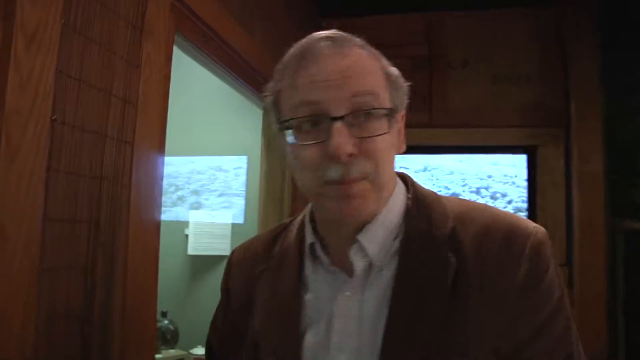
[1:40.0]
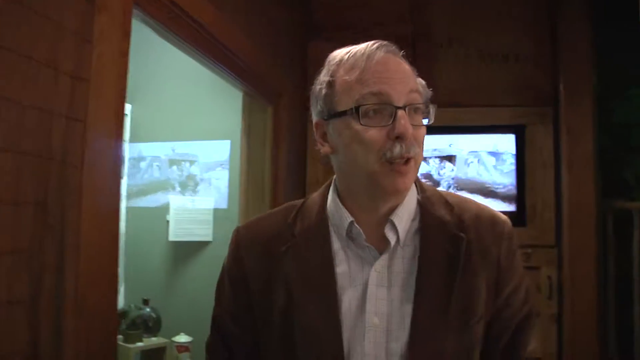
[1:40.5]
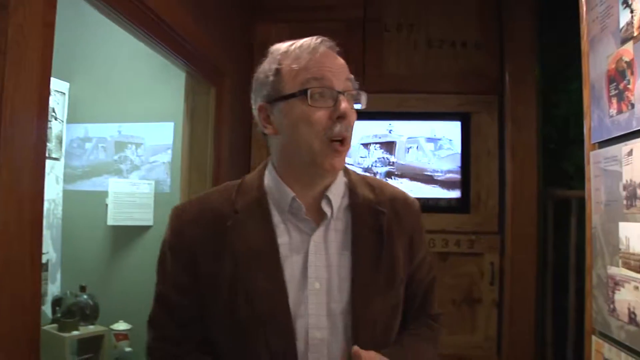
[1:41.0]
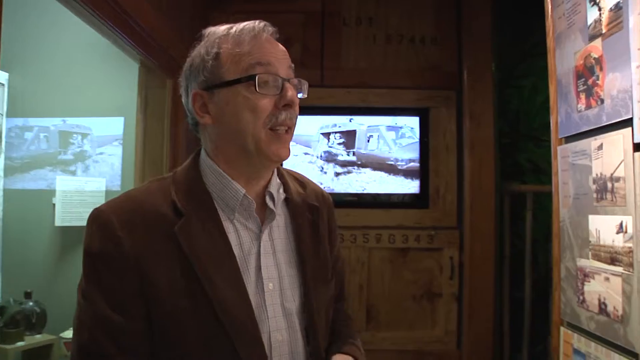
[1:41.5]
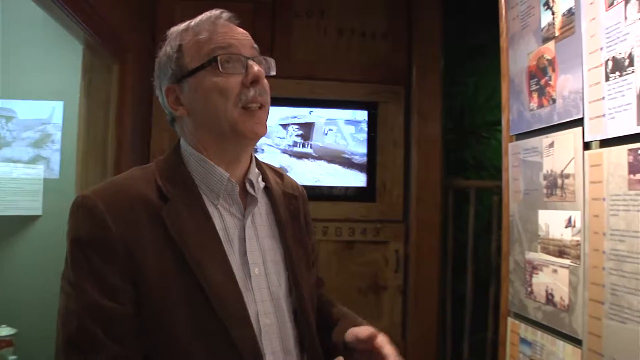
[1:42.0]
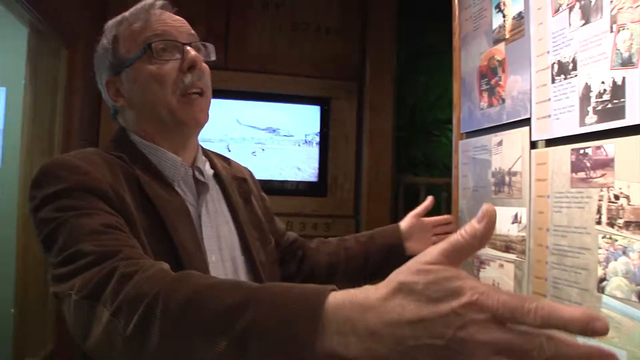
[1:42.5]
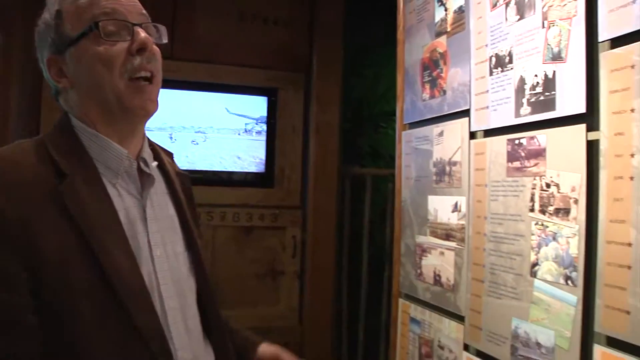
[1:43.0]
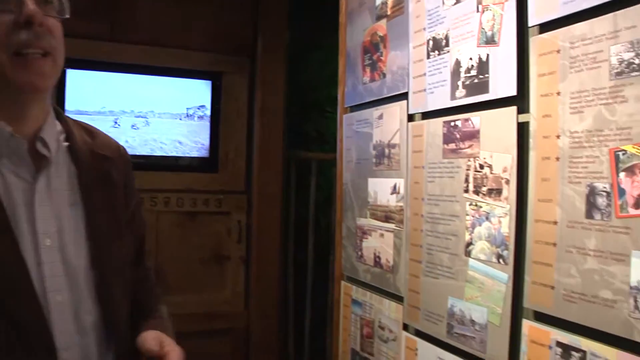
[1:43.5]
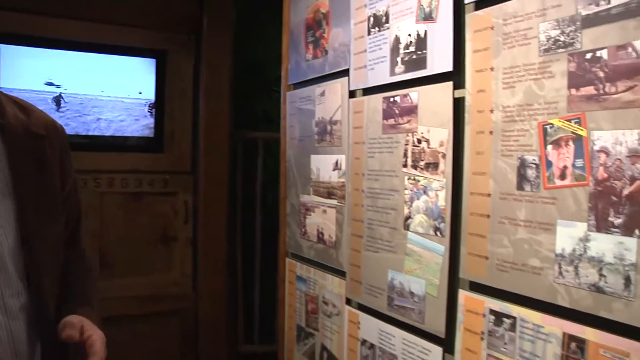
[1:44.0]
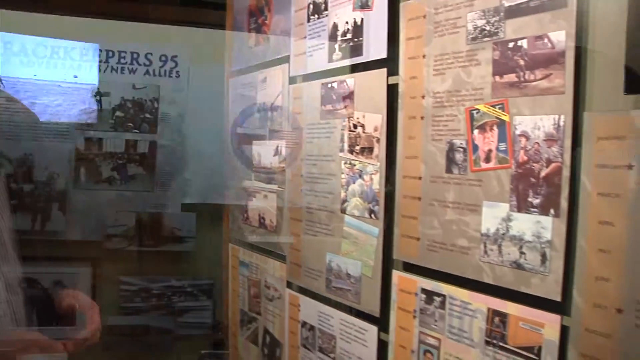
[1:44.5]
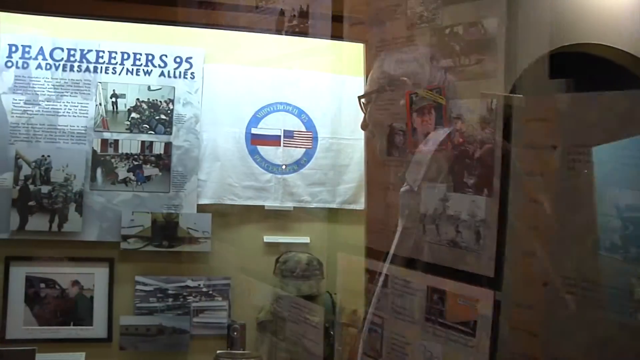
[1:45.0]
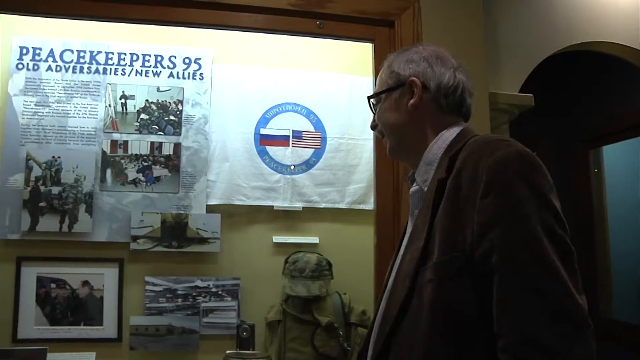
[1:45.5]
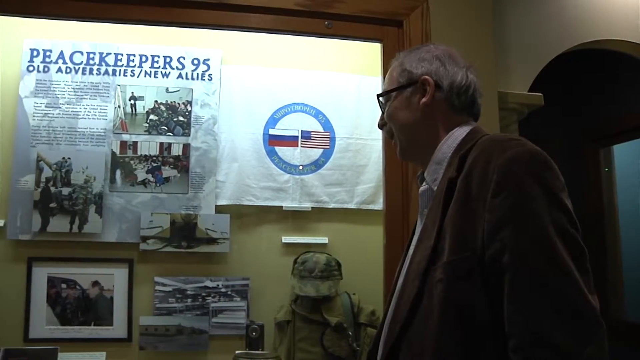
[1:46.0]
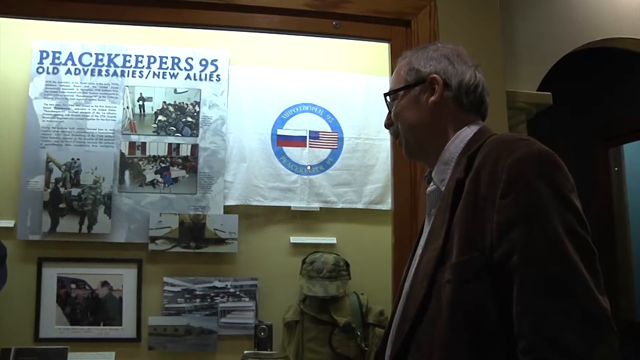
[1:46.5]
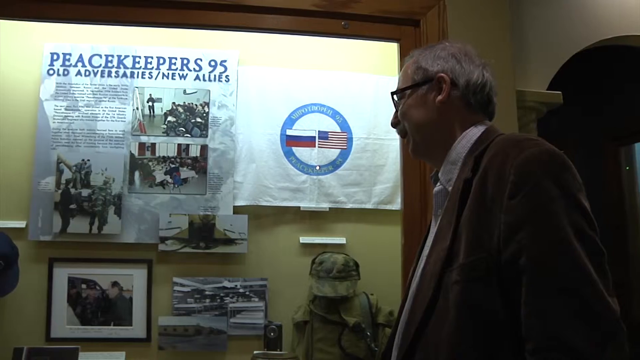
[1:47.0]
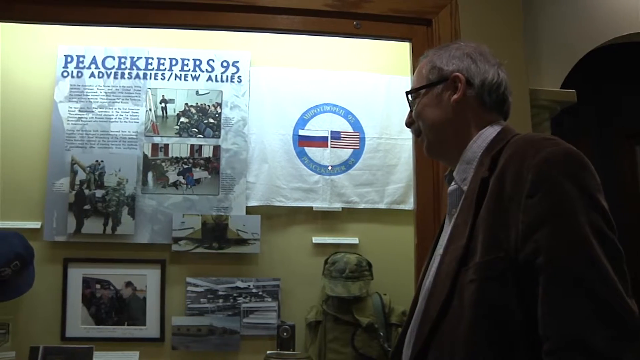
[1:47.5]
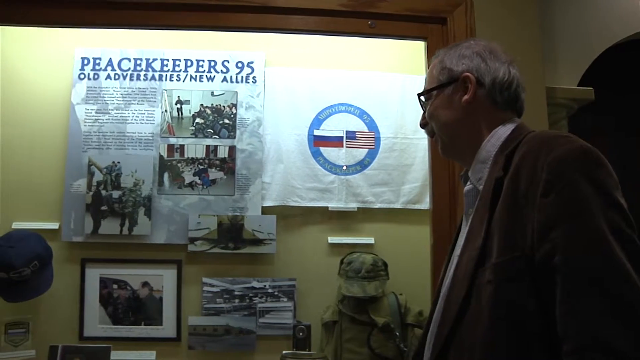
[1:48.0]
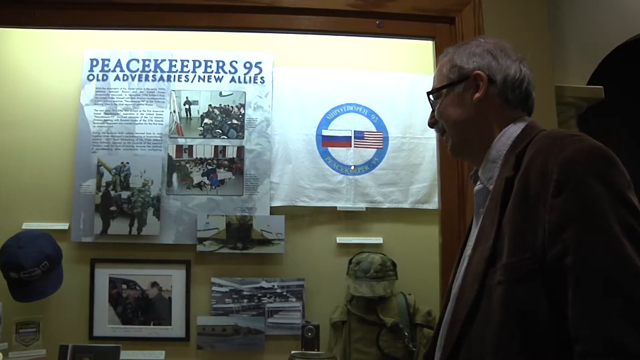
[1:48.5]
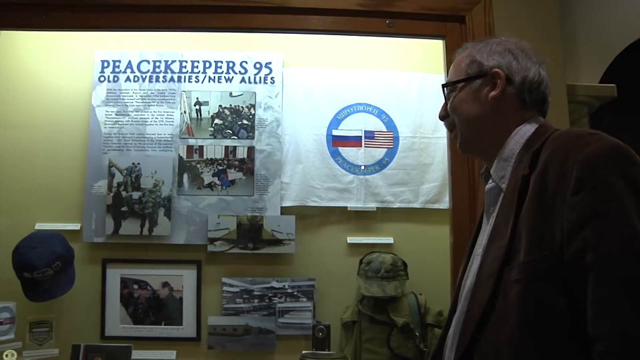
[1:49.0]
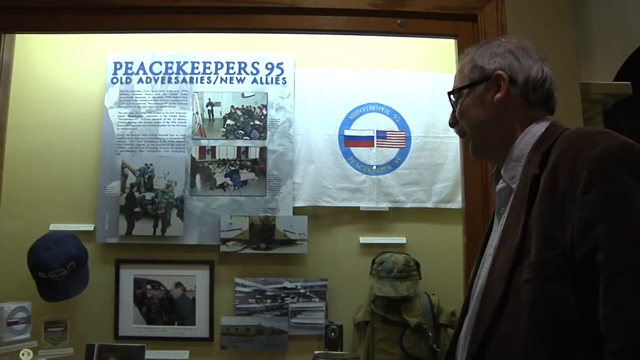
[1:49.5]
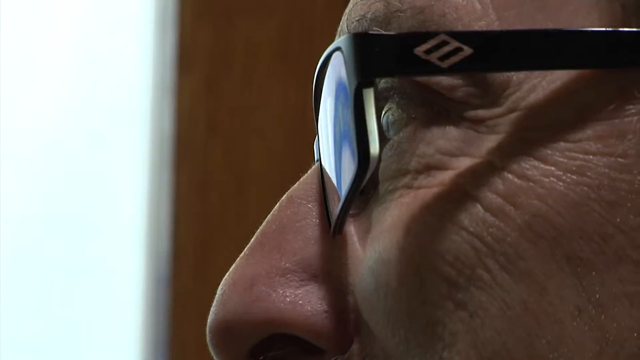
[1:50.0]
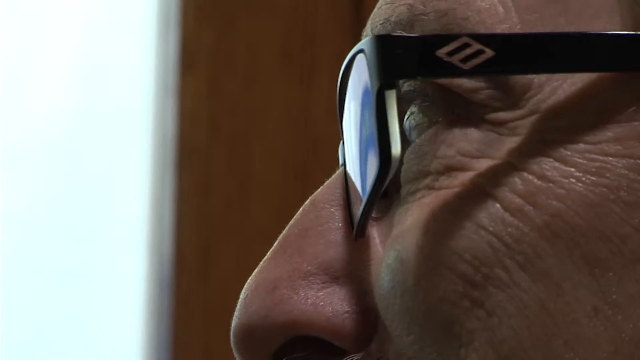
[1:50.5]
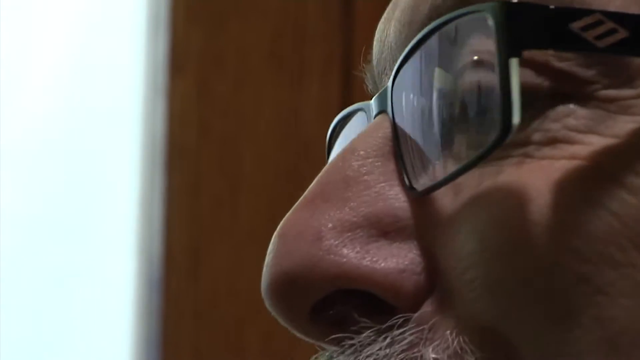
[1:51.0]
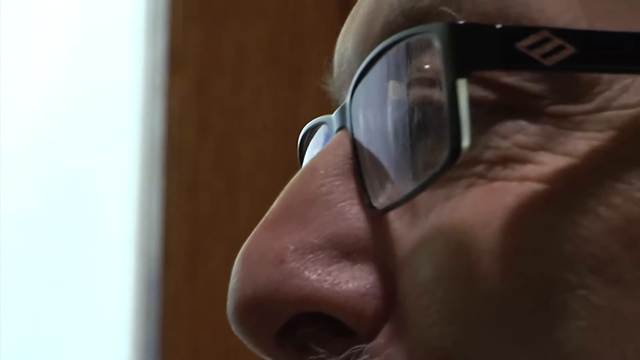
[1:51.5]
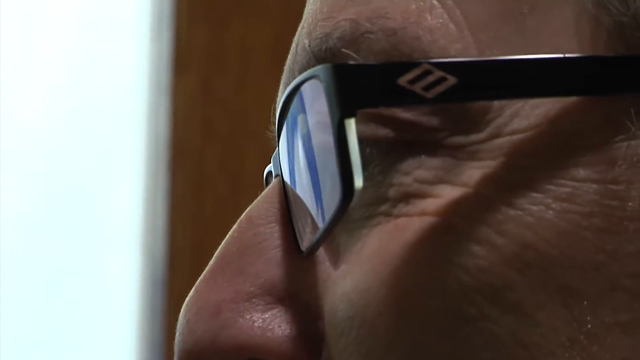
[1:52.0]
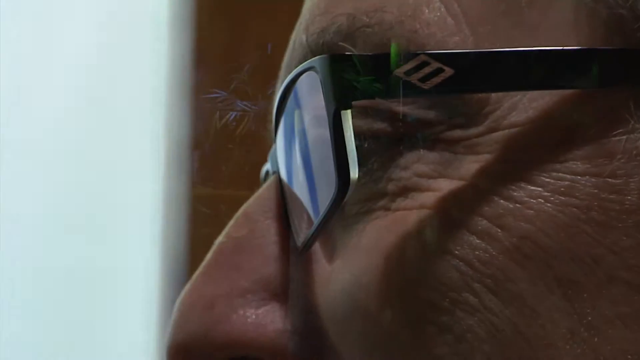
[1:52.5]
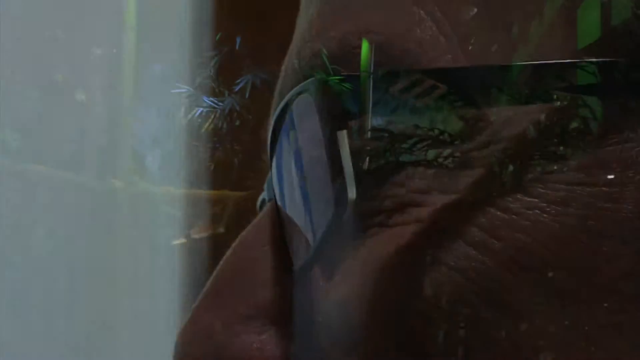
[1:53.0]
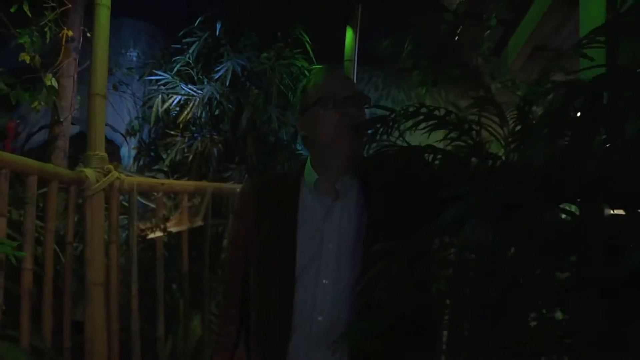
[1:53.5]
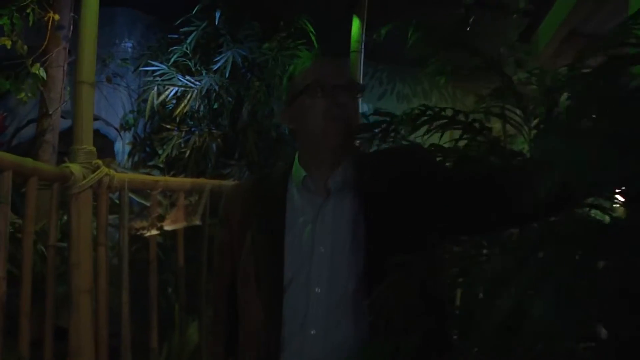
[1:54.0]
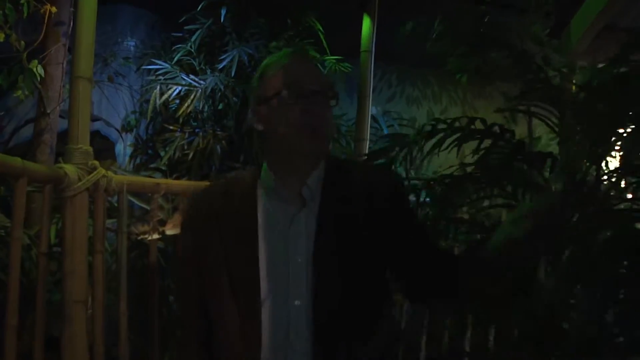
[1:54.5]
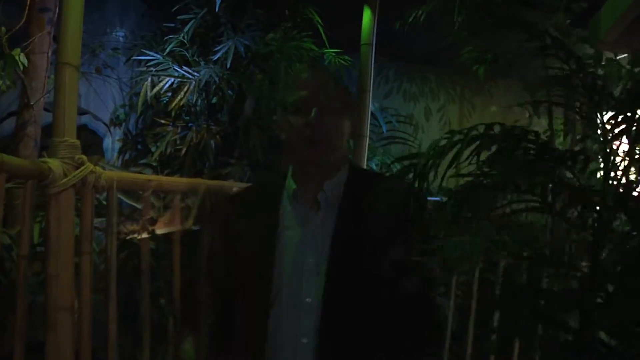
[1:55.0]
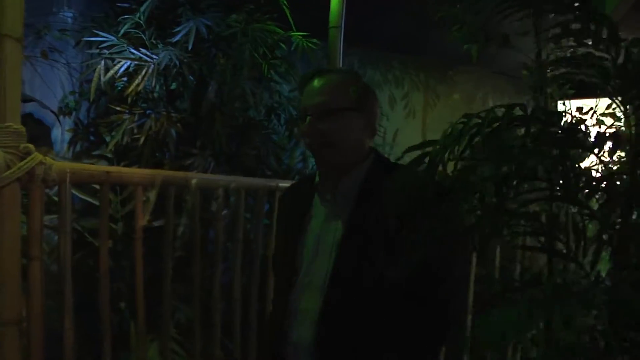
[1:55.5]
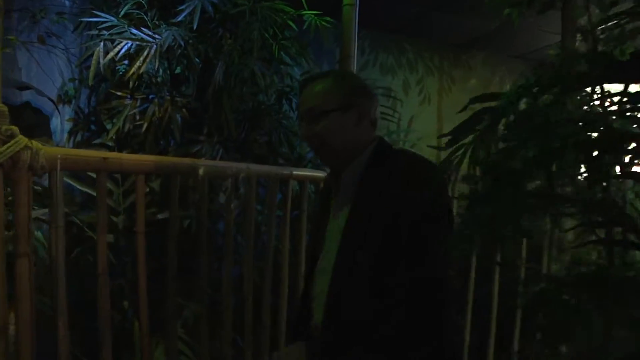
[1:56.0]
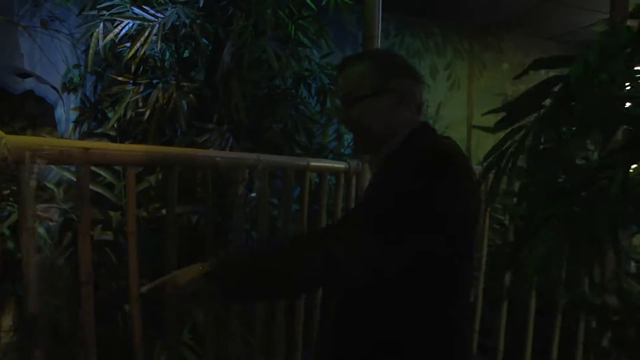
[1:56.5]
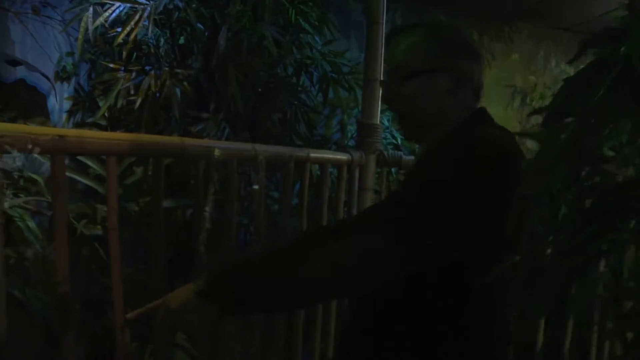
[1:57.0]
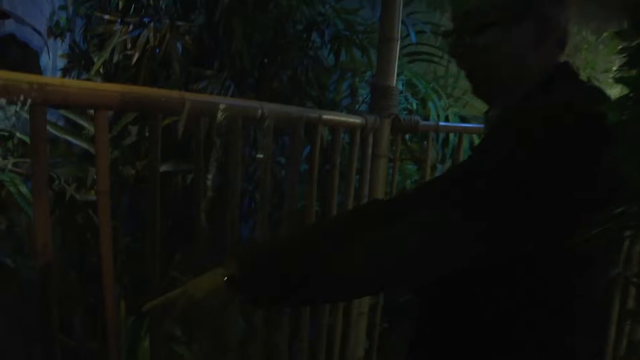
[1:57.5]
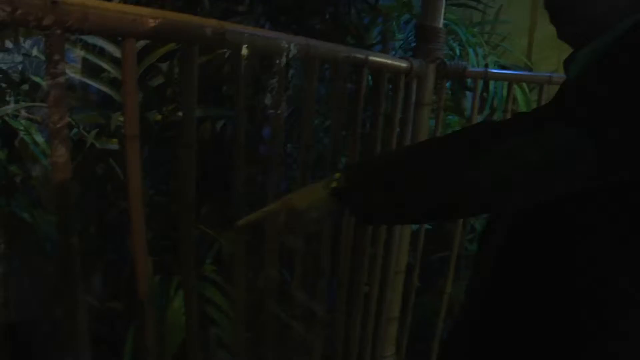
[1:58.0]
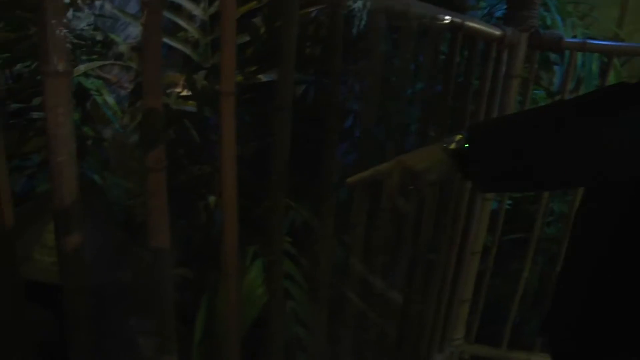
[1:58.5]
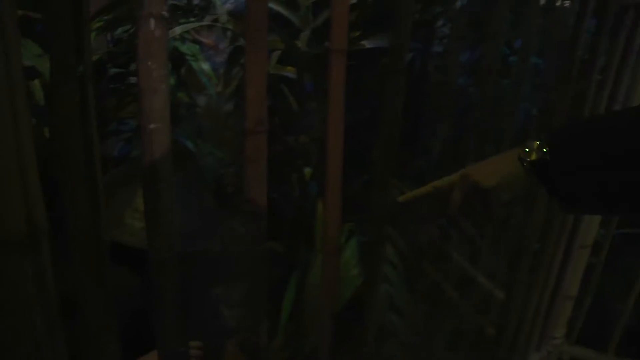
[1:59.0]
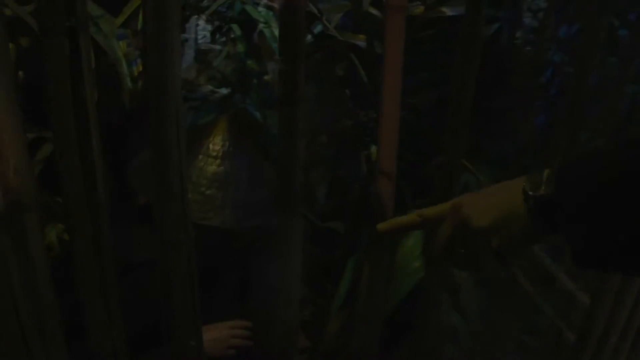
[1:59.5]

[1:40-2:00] A historian-type man is in a military history museum. "Peacekeepers 95" is shown with the words "old adversaries / new allies." A fake jungle appears, possibly about Vietnam, and different things that happened during different years in the 60s are shown. Two flags are next to each other: one is American, and the other is an unidentified flag with horizontal bars, white on top, blue in the middle and red on the bottom. The video cuts back to the historian giving the tour in a jungle setting, probably for the Vietnam War. The view is as if inside a hut made of bamboo lashed together with ropes. He points to something beyond a bamboo fence that cannot be seen; it might be a mannequin of someone hiding, like a soldier.